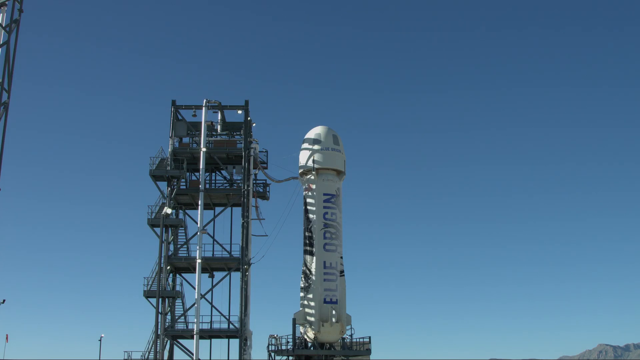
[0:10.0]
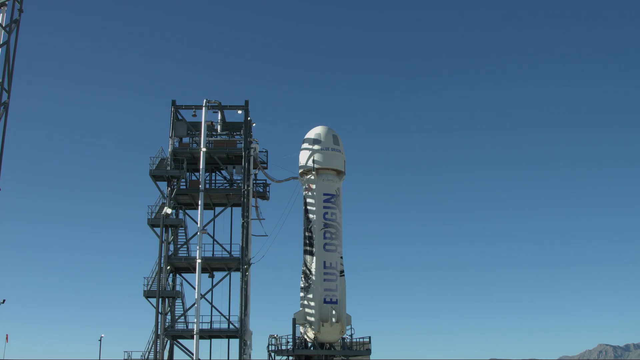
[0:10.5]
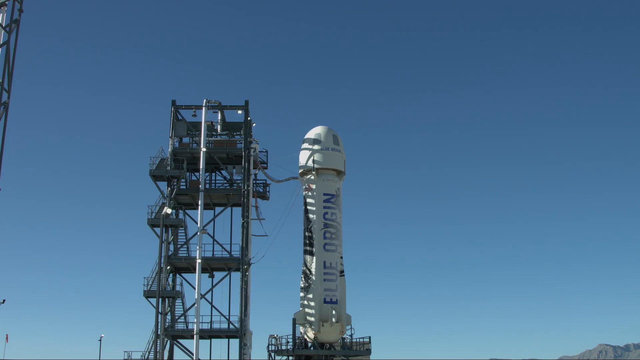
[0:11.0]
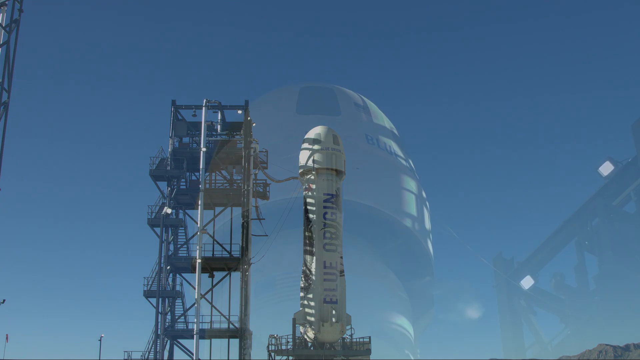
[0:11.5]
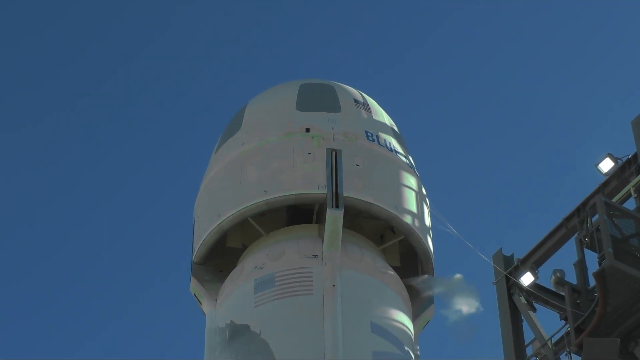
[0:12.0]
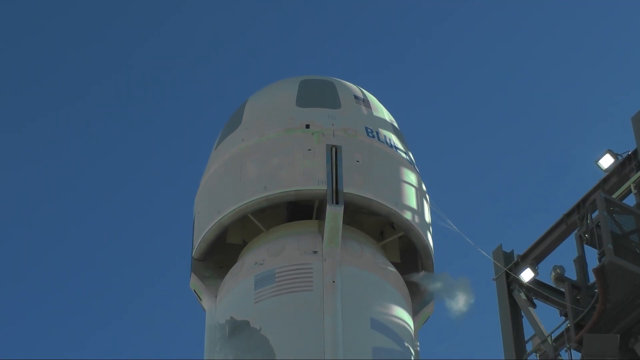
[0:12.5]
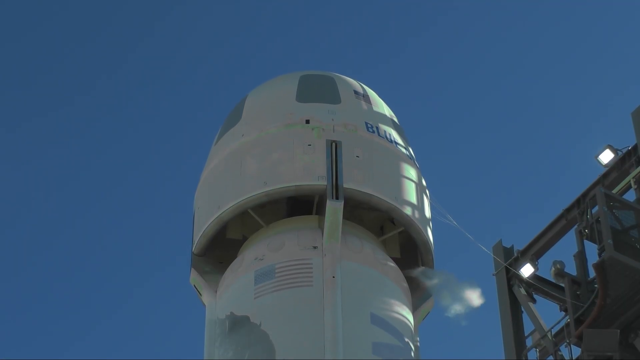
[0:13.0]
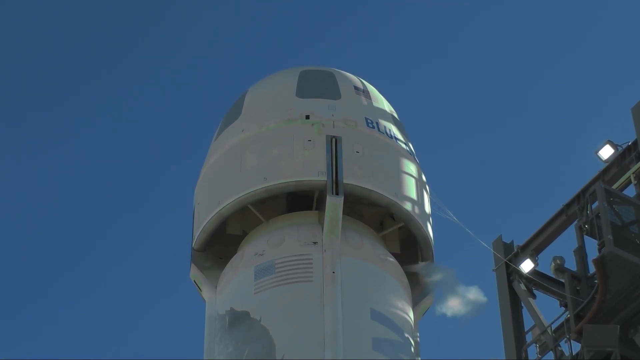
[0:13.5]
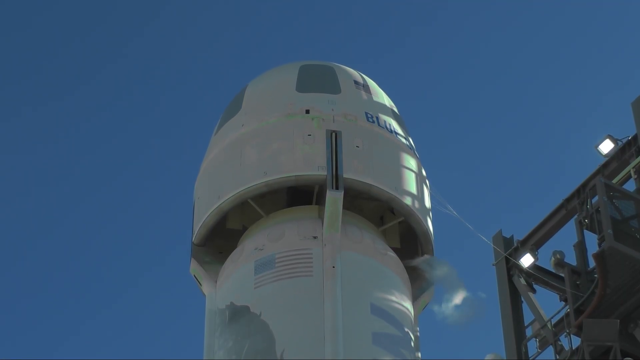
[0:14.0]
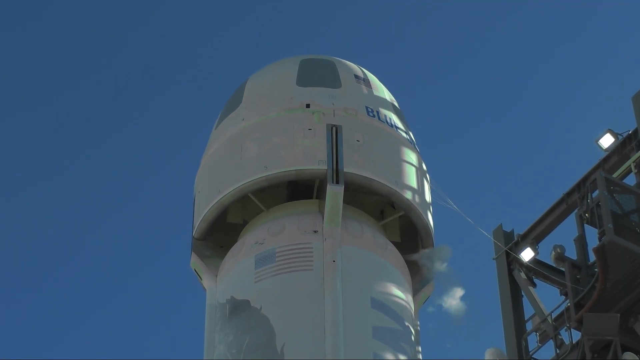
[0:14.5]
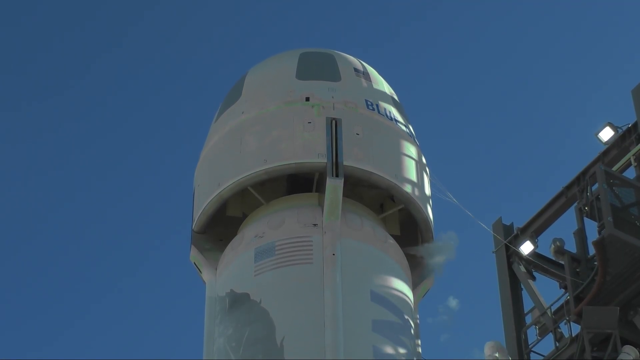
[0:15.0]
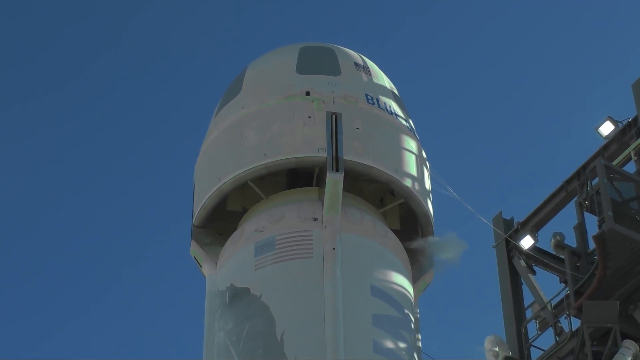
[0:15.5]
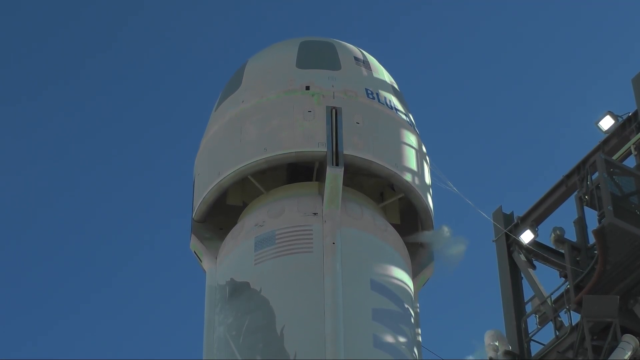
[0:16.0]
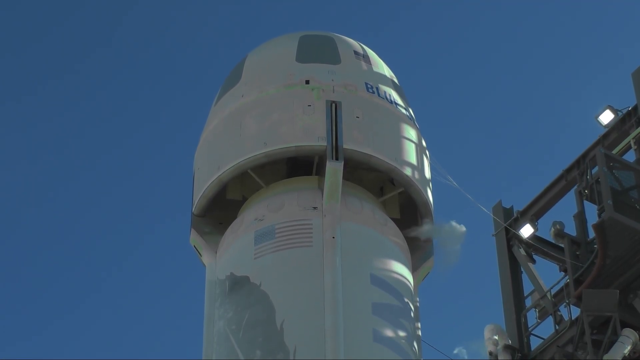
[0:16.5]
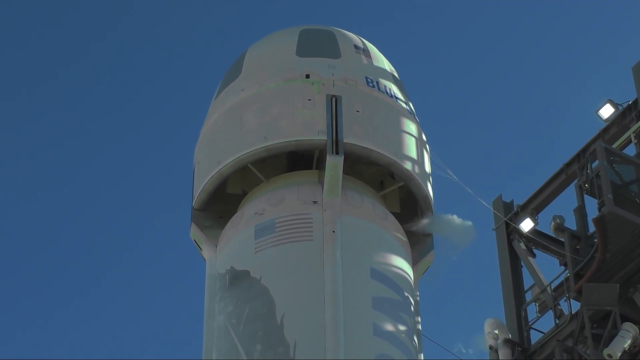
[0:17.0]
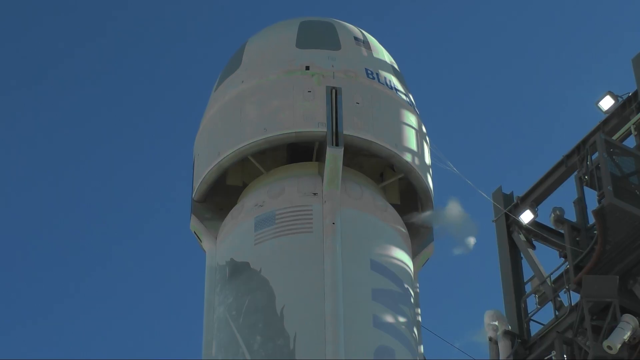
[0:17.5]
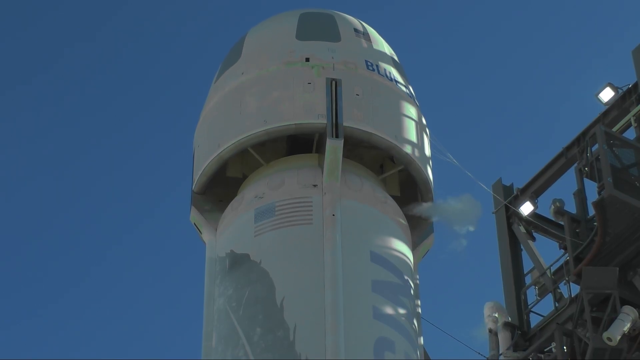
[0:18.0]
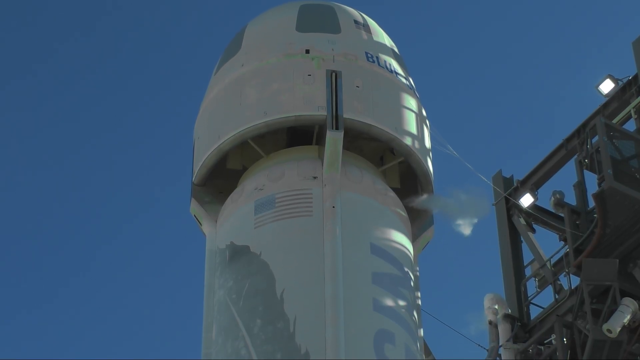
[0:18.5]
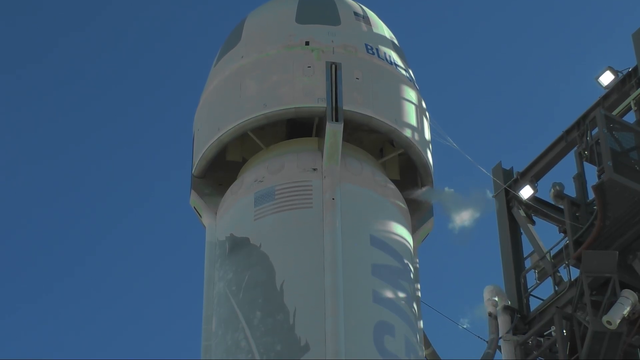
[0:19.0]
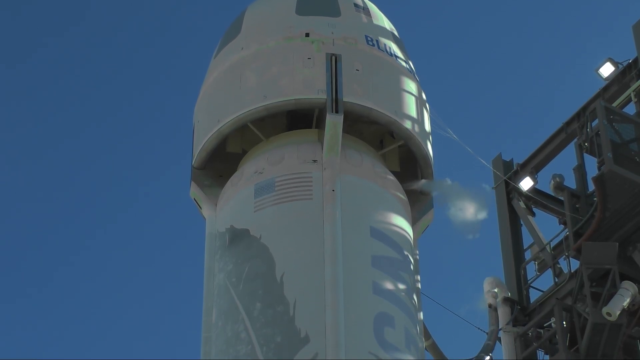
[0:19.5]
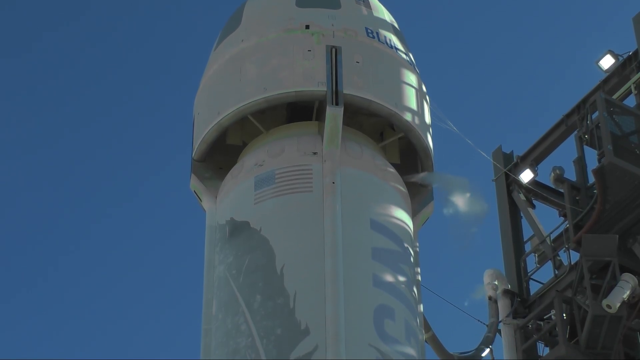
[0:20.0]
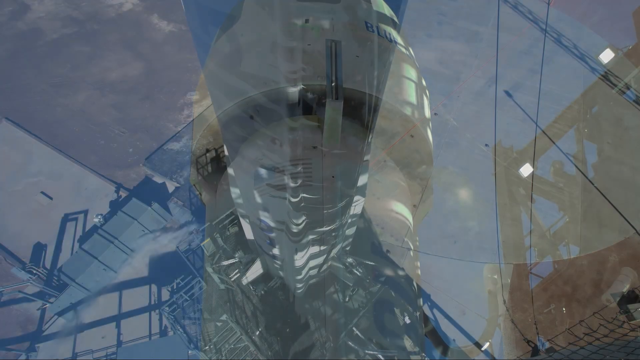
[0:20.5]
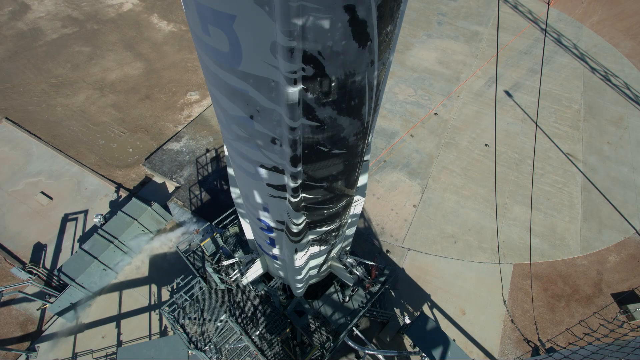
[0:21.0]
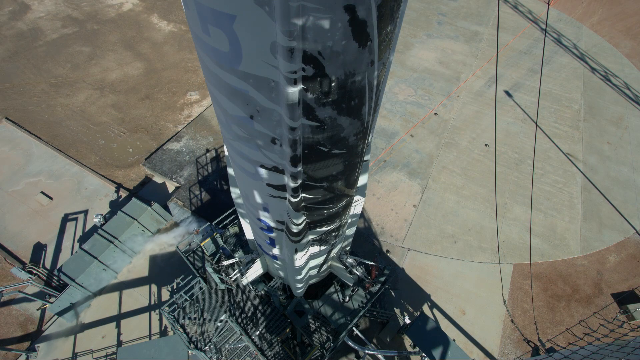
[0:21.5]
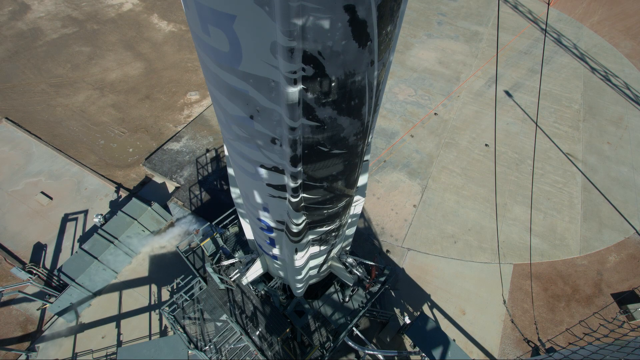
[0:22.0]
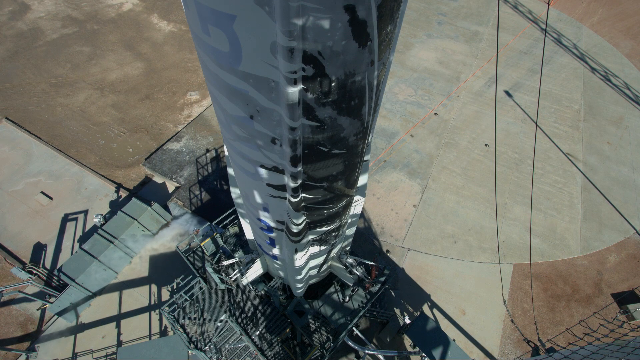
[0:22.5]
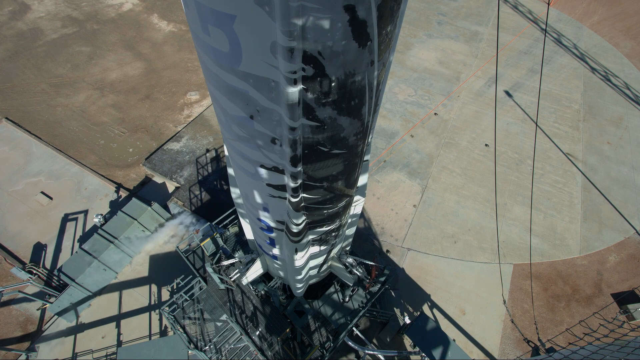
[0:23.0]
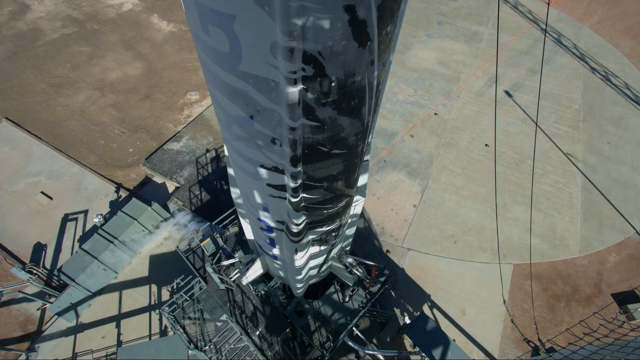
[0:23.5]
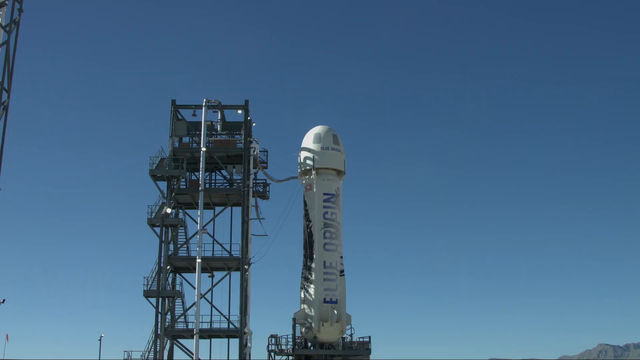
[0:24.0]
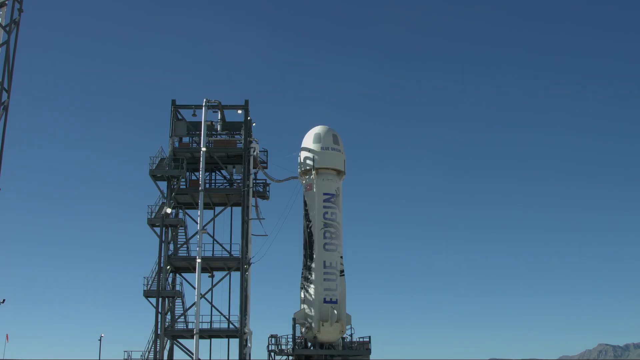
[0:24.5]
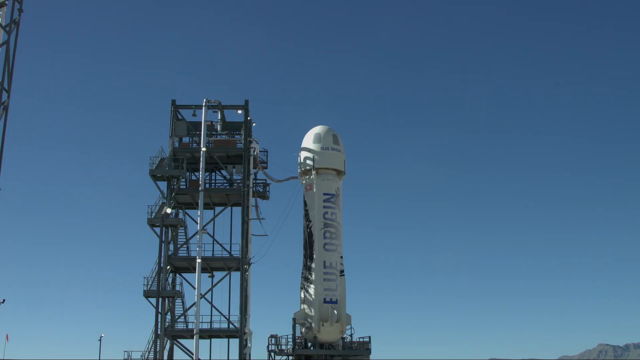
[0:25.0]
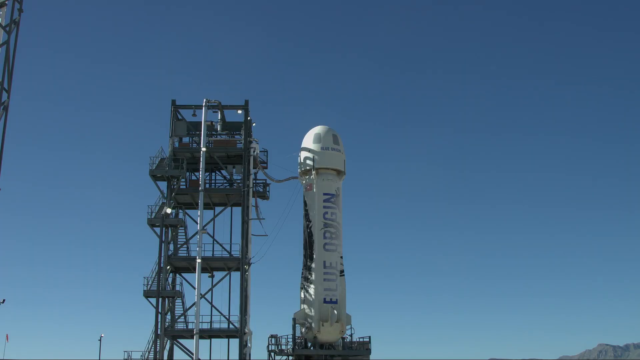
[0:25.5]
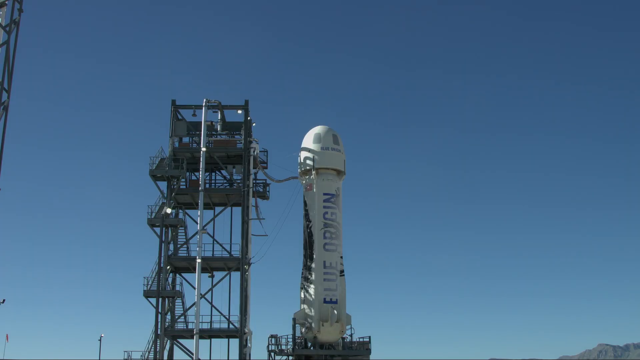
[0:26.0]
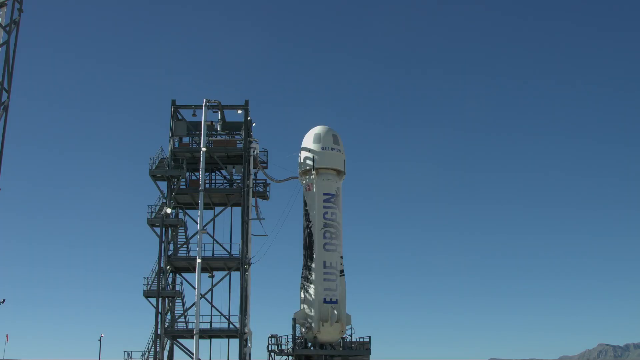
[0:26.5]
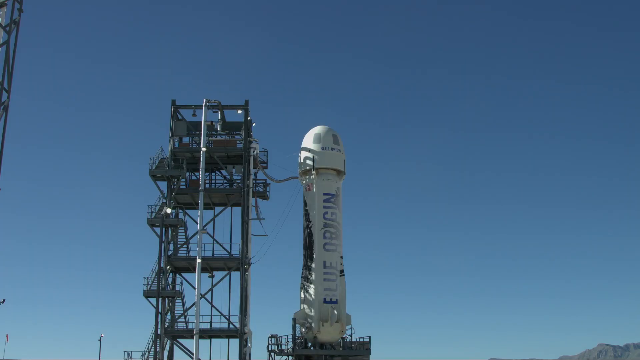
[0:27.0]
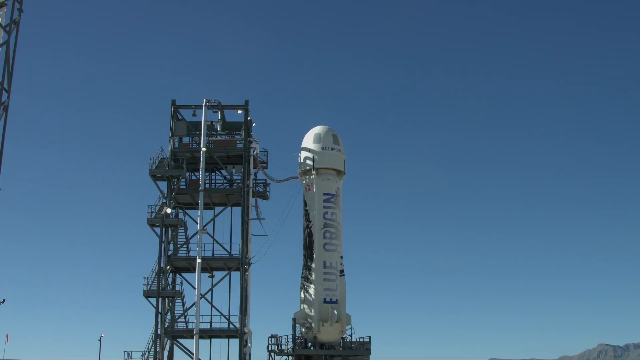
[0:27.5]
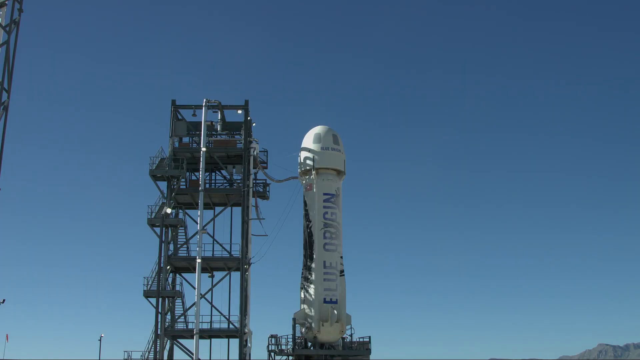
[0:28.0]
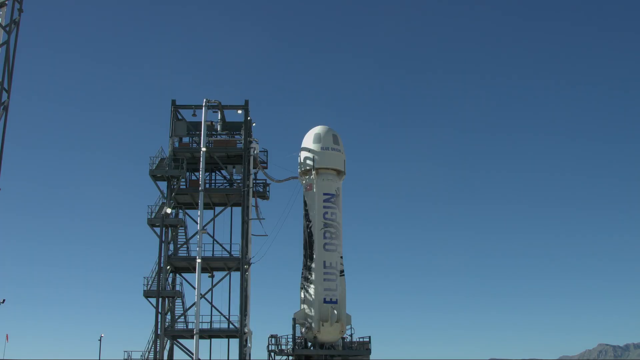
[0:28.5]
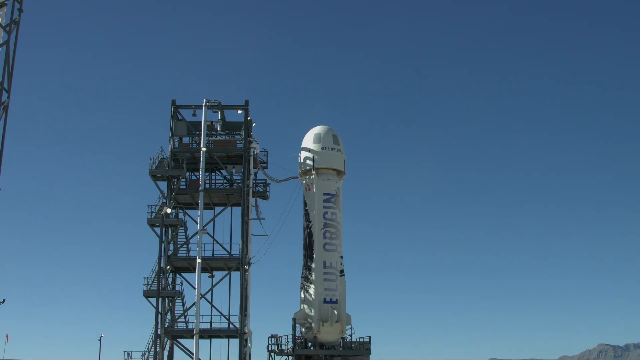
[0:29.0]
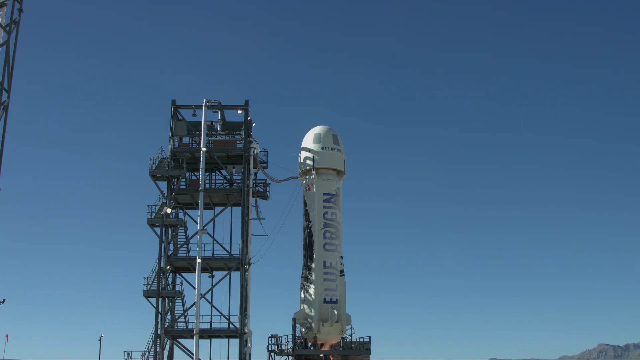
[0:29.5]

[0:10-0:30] A closer view shows the metal scaffolding standing next to the rocket ship against a deep blue, cloudless sky. The scaffolding is on the left-hand side of the frame, and a slight sliver of more metal scaffolding appears at the edge of the frame. The rocket is cone-shaped and white, with the words "Blue Origin" on its side. A cord attaches the rocket to the scaffolding. The camera pans more closely, giving a close-up of the top of the rocket. Below that, the body of the rocket bears a painted American flag and some other painted images that are hard to make out. In the lower right-hand corner of the background, the very beginning of a ridge of mountains is visible.